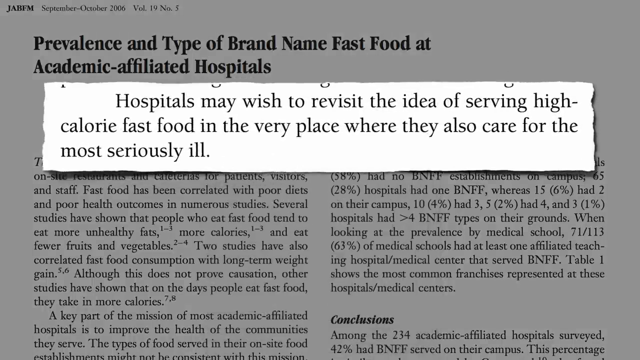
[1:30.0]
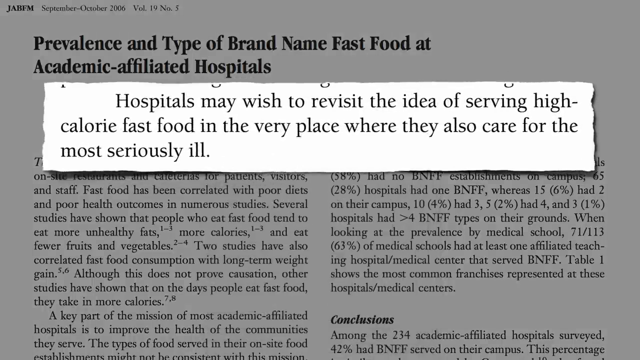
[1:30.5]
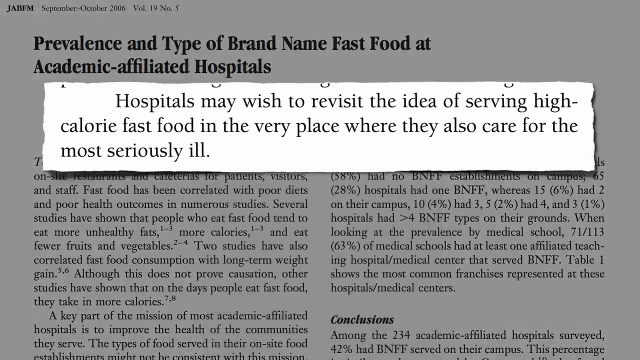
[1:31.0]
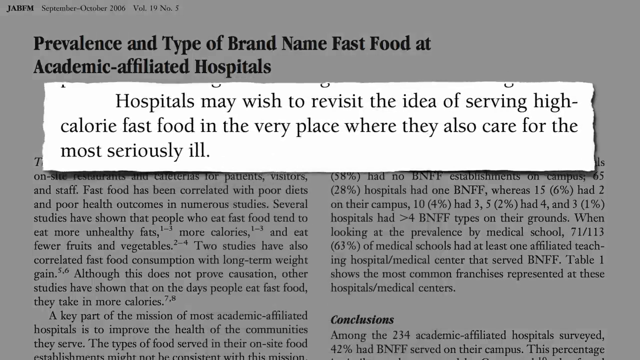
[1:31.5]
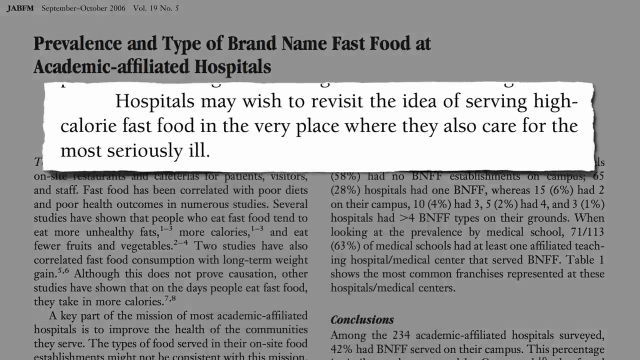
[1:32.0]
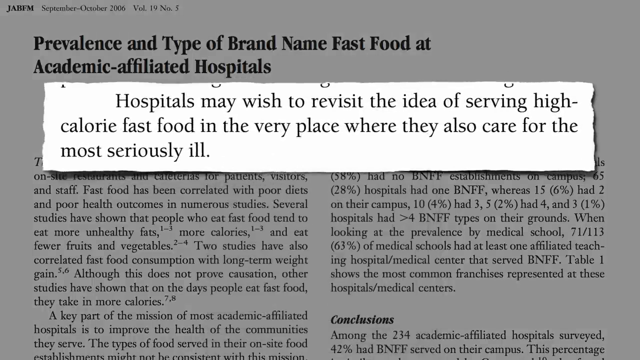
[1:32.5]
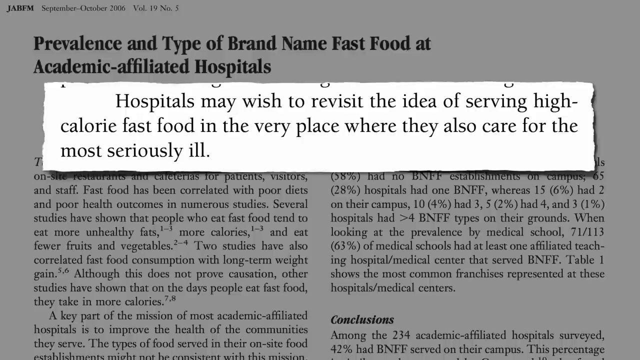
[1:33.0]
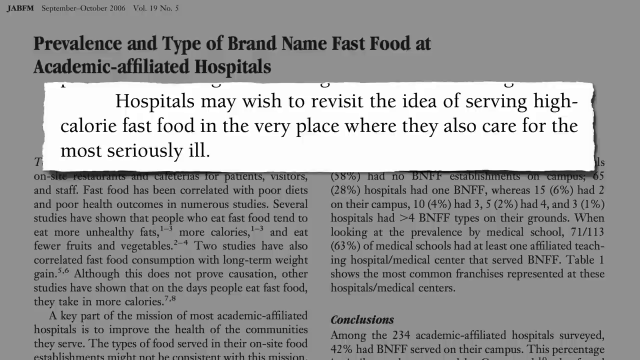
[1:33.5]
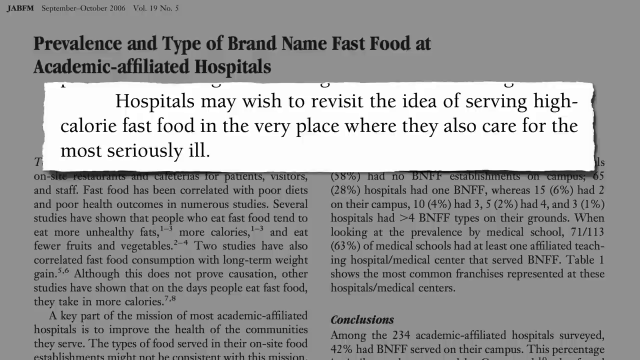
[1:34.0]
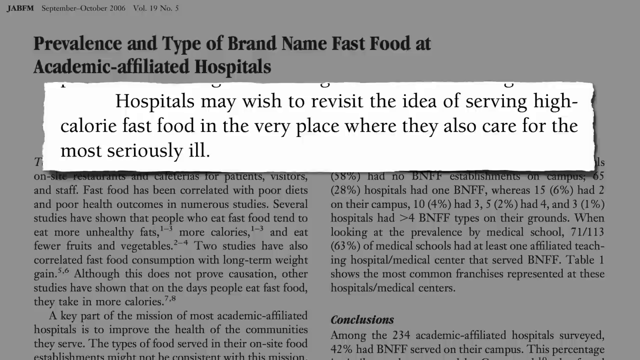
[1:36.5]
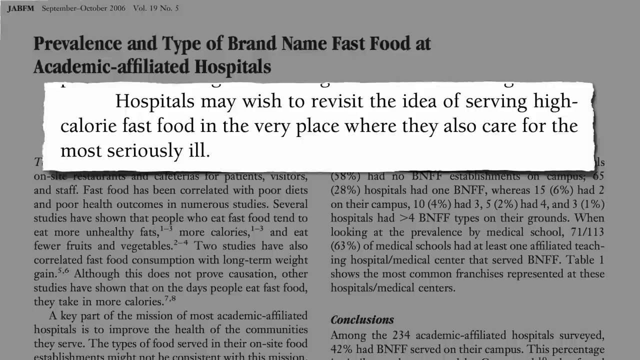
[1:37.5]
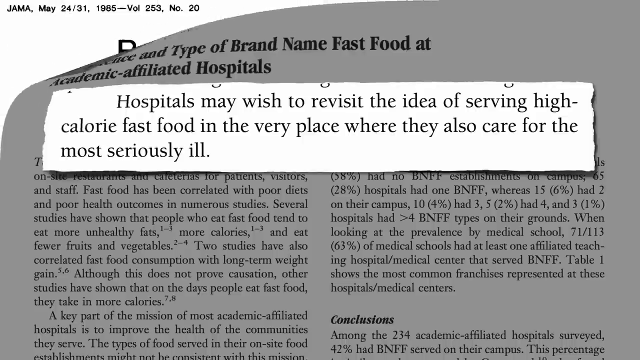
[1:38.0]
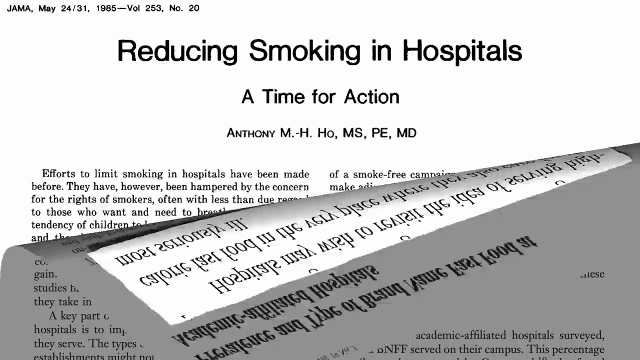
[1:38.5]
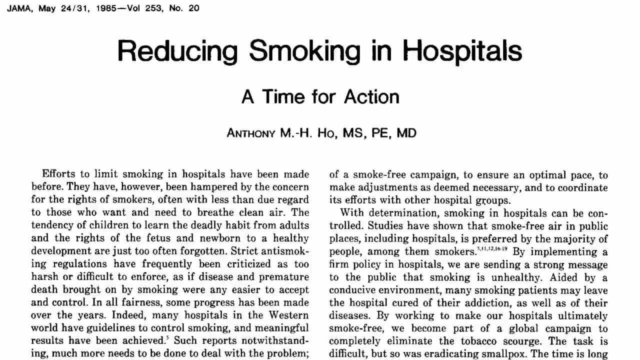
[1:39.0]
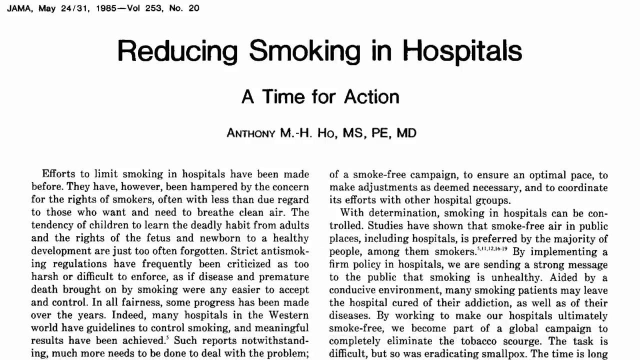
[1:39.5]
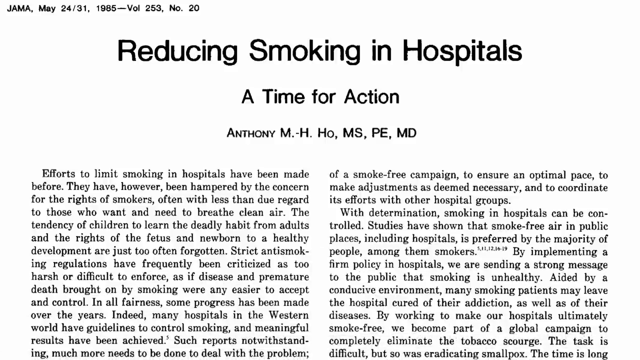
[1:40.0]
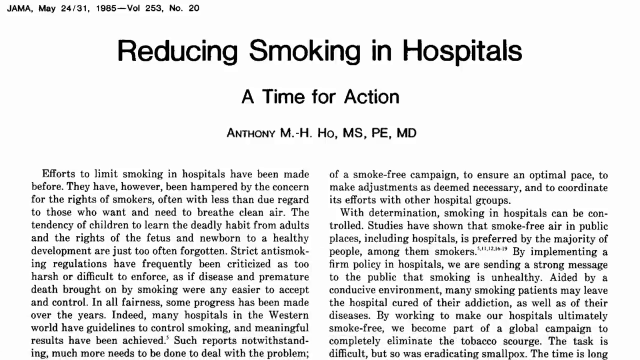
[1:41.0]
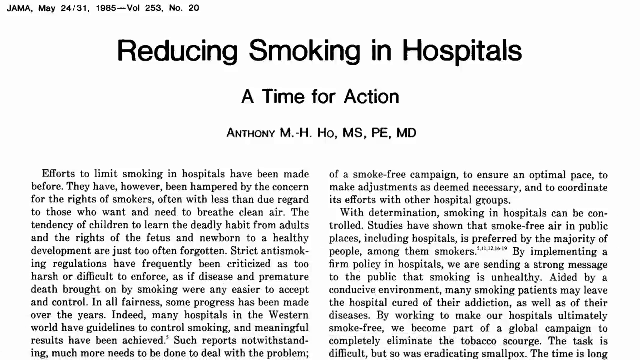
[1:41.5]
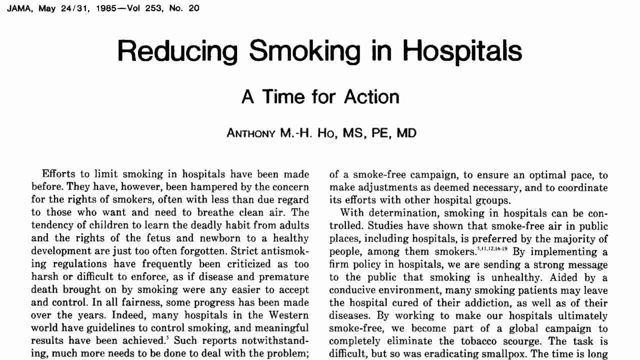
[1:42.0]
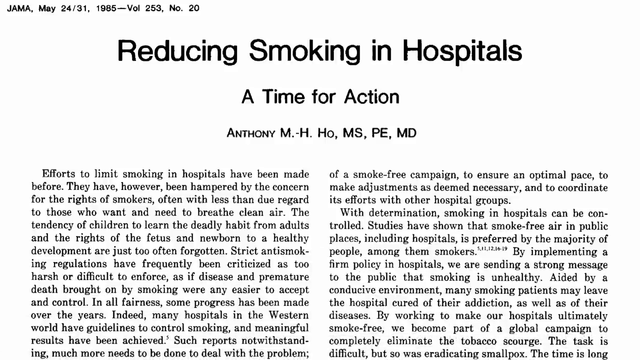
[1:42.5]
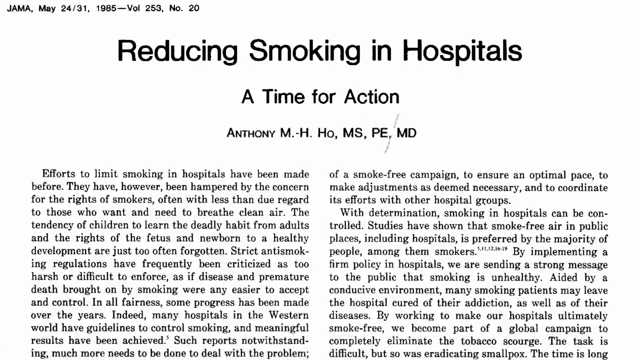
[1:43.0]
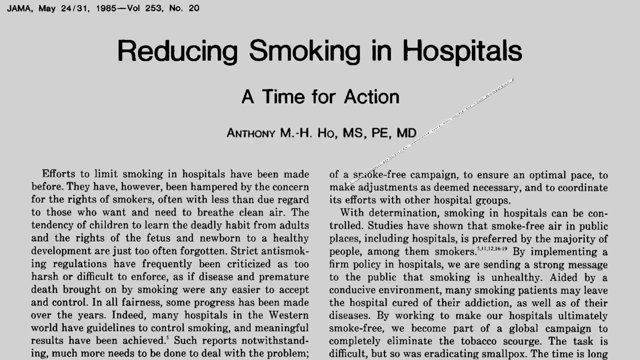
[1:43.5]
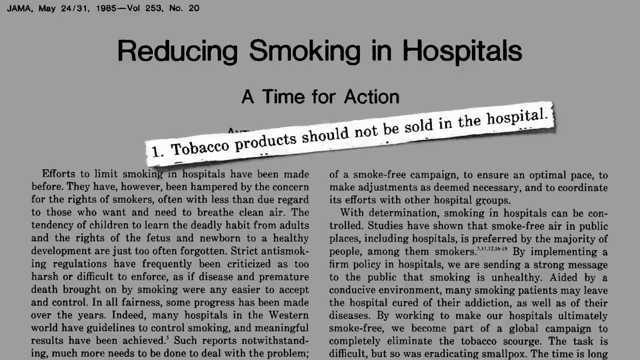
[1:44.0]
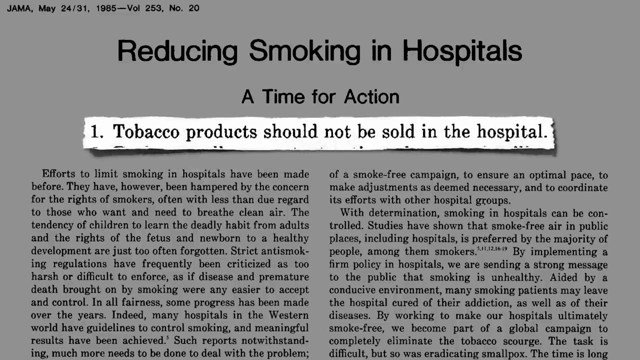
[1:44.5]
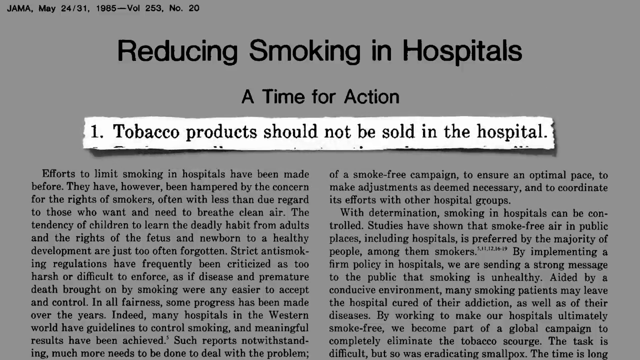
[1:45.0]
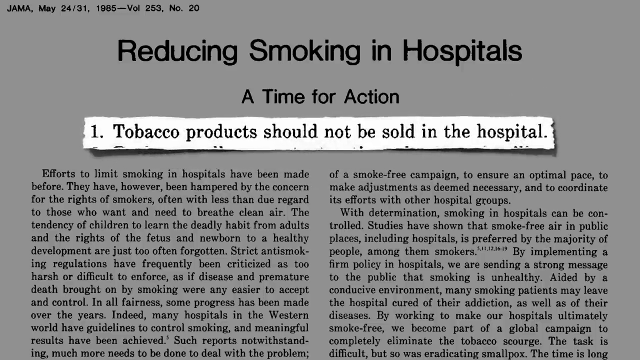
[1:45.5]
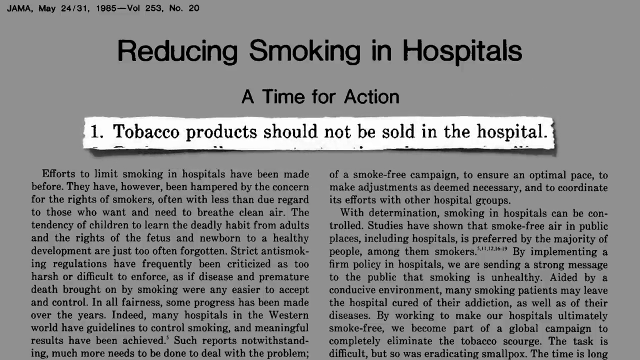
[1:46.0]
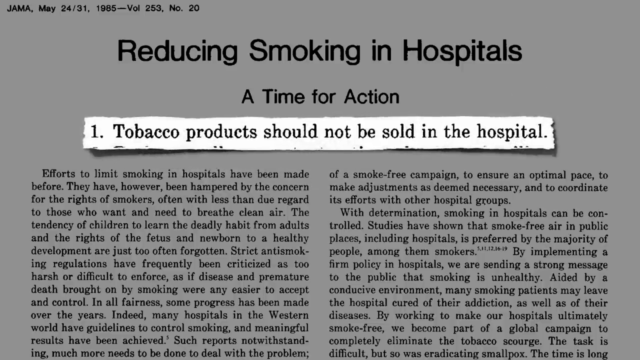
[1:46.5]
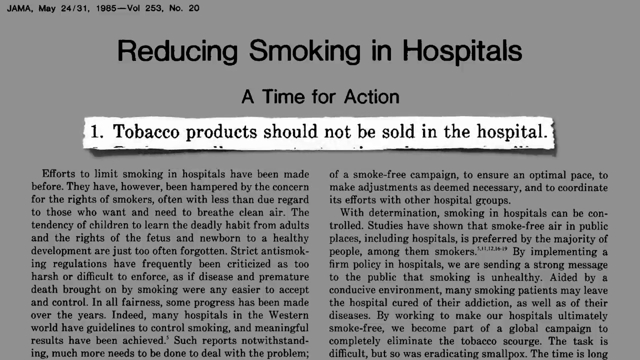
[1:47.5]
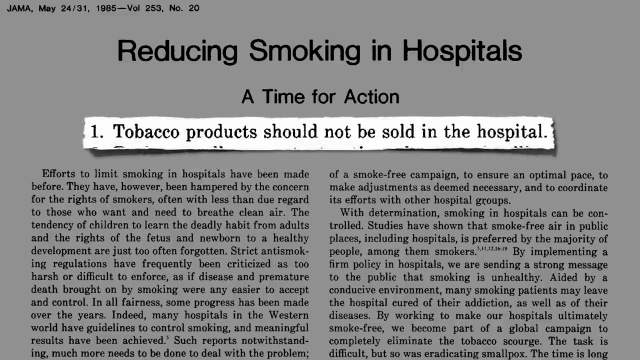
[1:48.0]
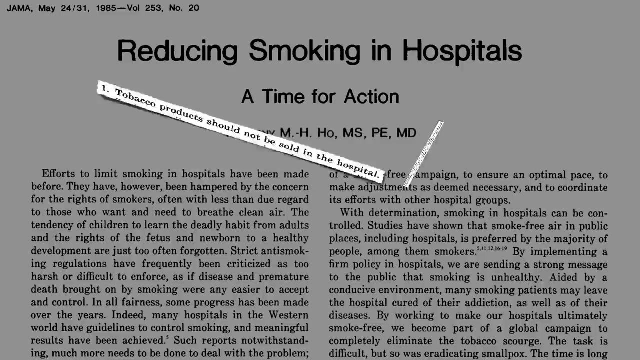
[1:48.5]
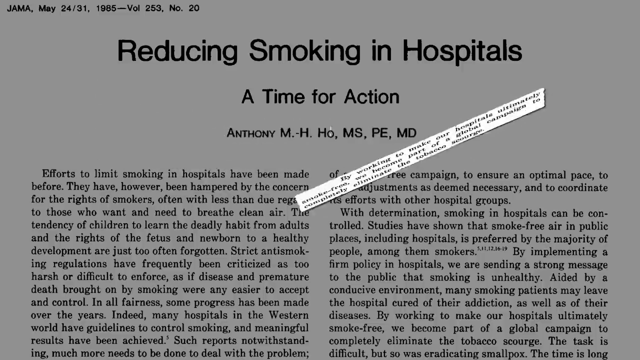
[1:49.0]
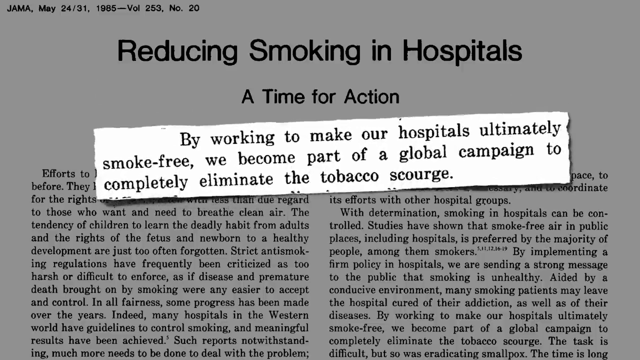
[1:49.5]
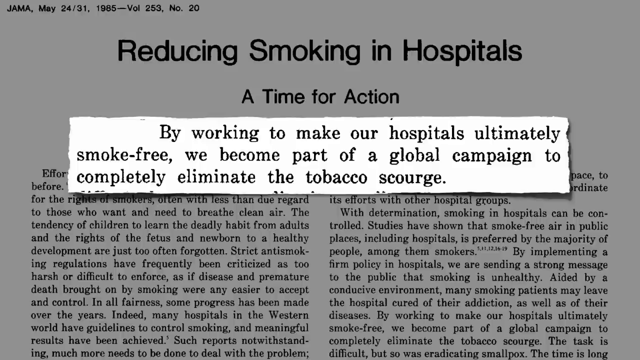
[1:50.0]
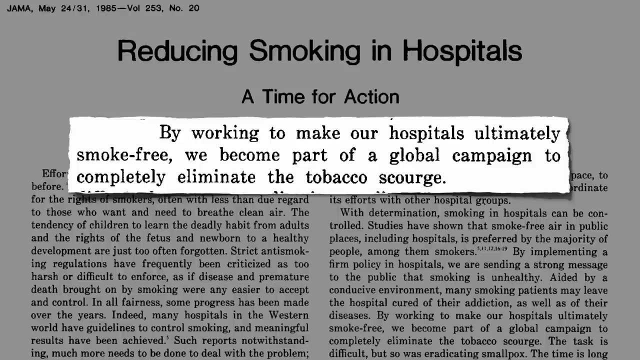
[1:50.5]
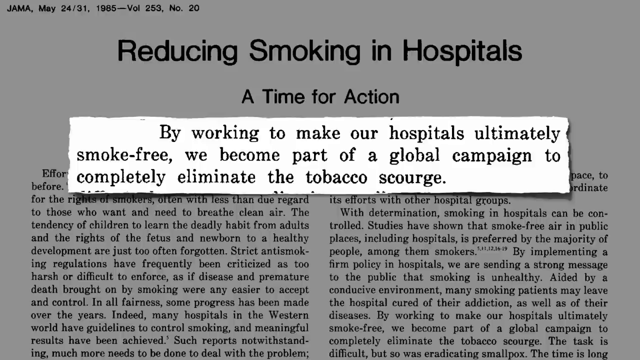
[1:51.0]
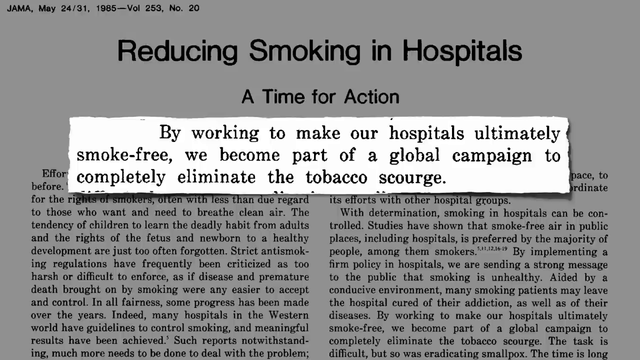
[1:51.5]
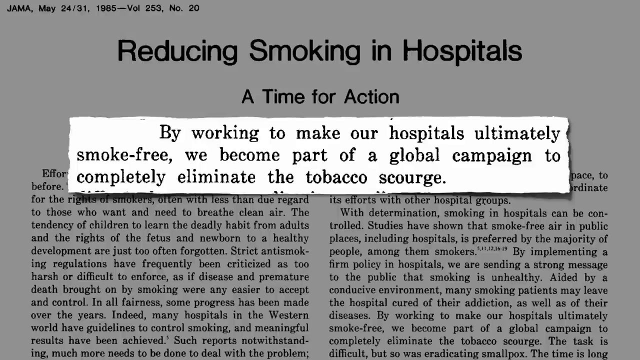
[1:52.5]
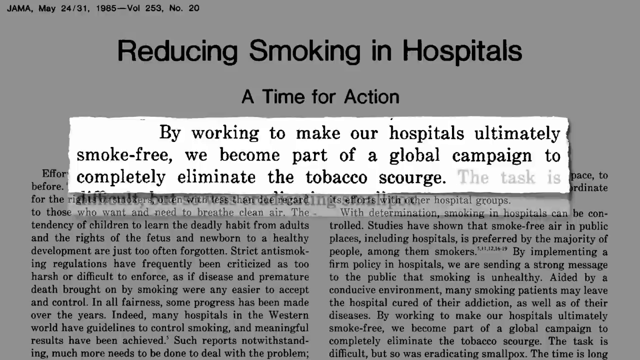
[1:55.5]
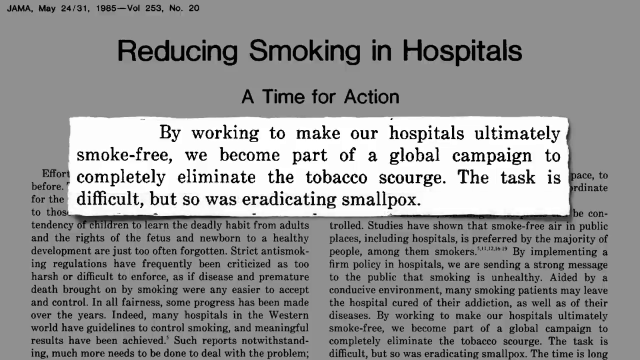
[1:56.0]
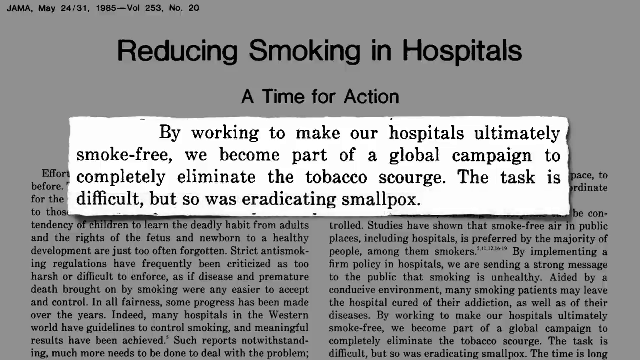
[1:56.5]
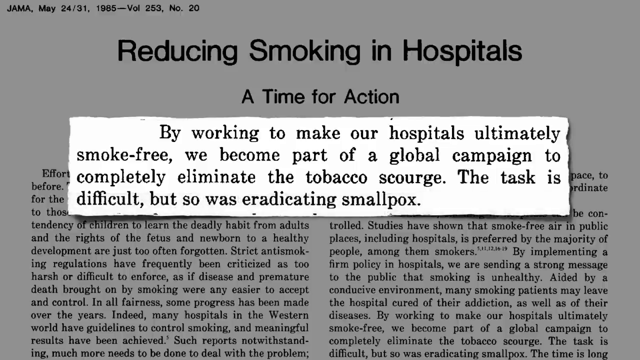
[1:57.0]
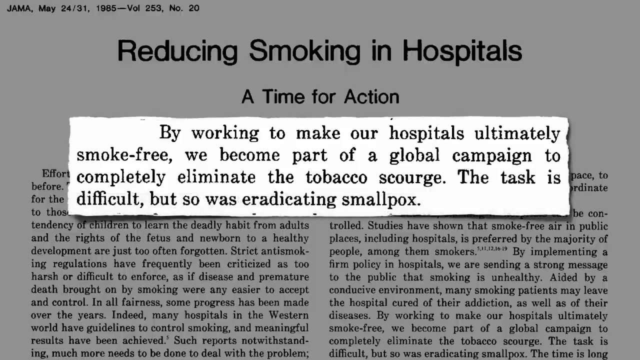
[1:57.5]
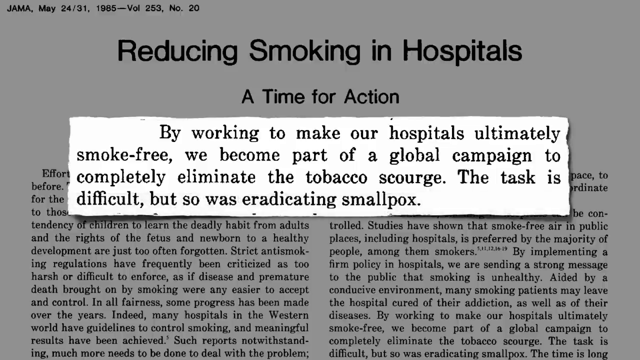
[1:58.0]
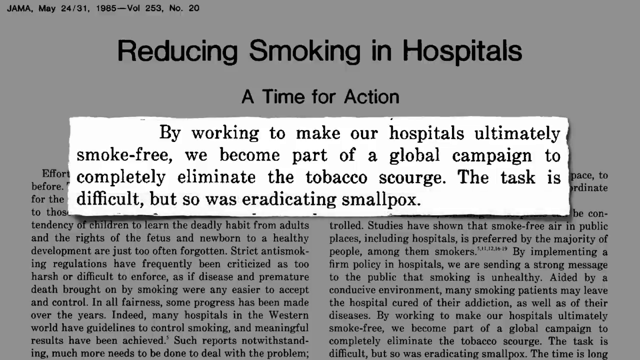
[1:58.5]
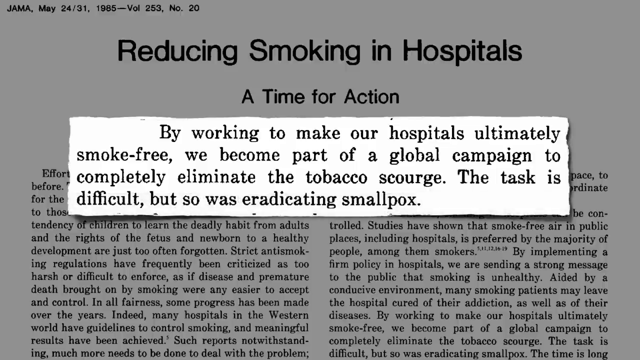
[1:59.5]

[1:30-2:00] A white cutout on the article highlights that hospitals may wish to revisit the idea of serving high-calorie fast food in the very place where they also care for the more seriously ill. The article then falls away, and a new article titled "Reducing Smoking in Hospitals, a Time for Action" comes into view; it looks like it is from a journal. A snippet is cut out and flies to the middle of the screen, highlighted from the article: "1. tobacco product should not be sold in the hospital." A new clipping comes to the center while the old one fades out, reading "By working to make our hospitals ultimately smoke-free, we've become part of a global campaign to completely eliminate tobacco usage."